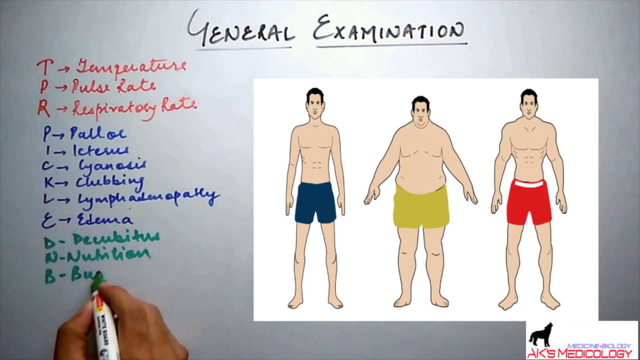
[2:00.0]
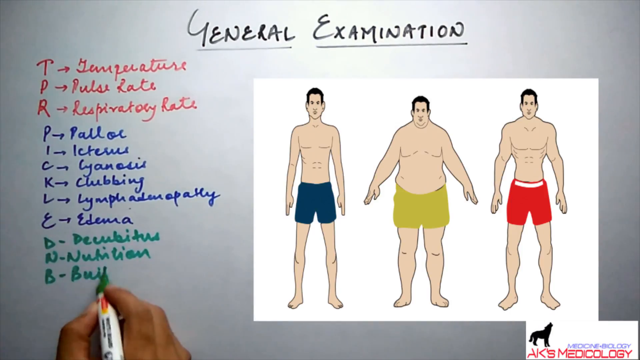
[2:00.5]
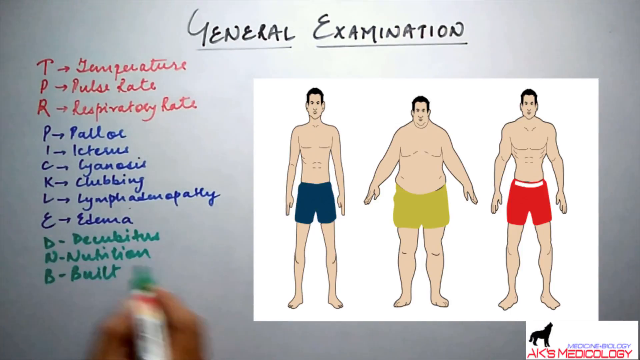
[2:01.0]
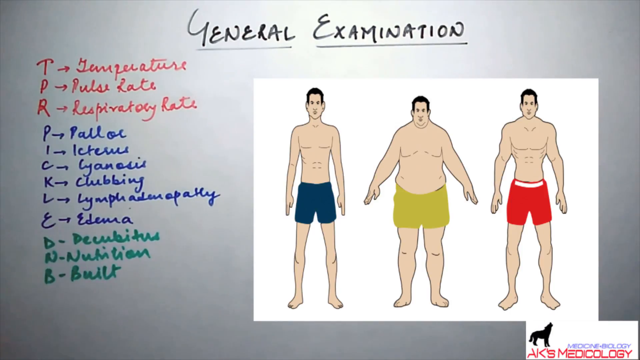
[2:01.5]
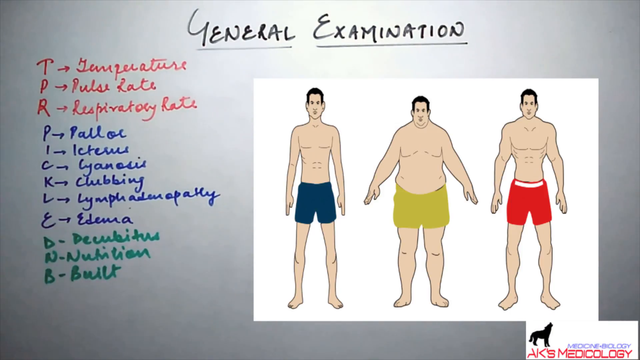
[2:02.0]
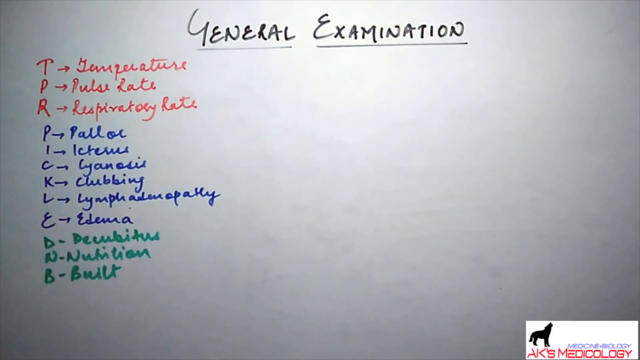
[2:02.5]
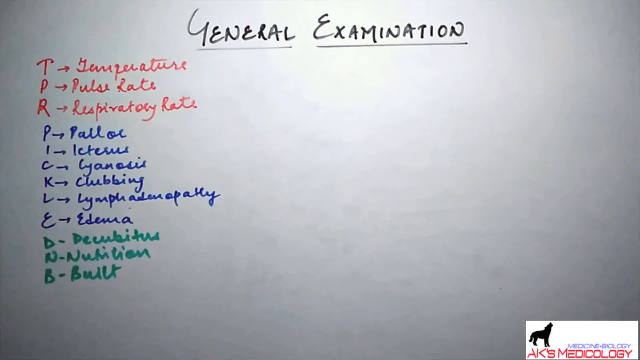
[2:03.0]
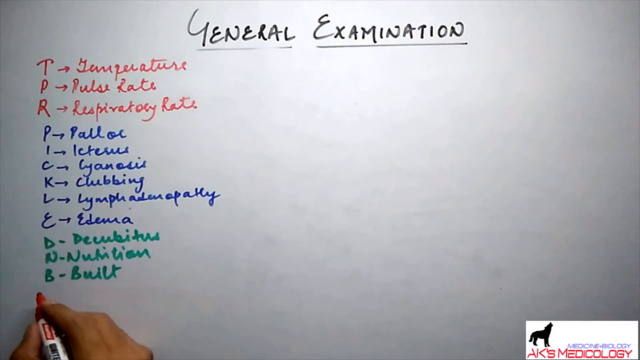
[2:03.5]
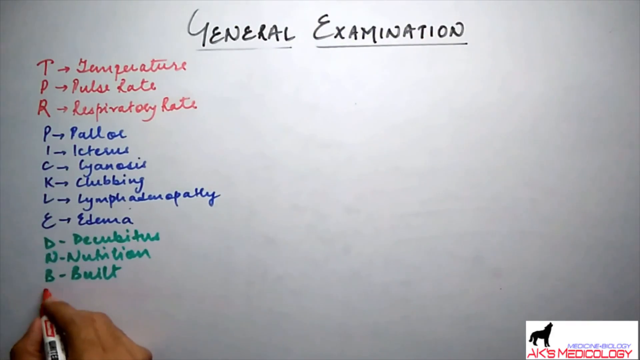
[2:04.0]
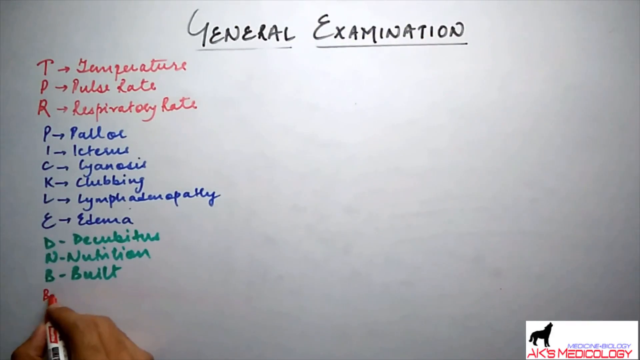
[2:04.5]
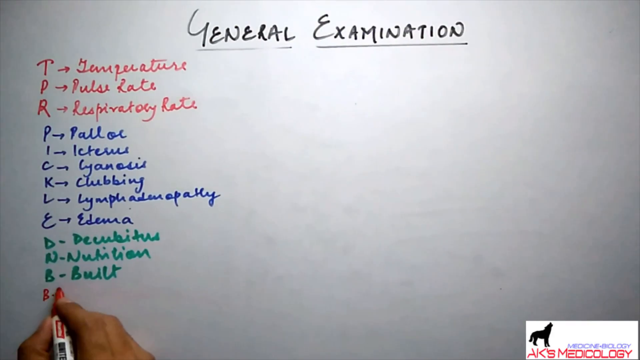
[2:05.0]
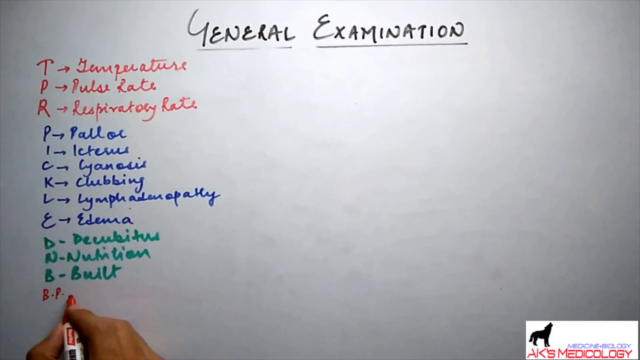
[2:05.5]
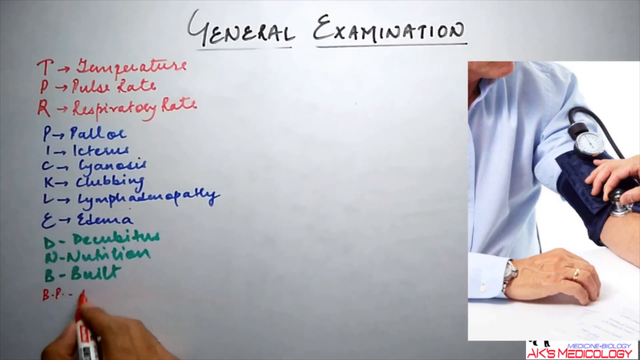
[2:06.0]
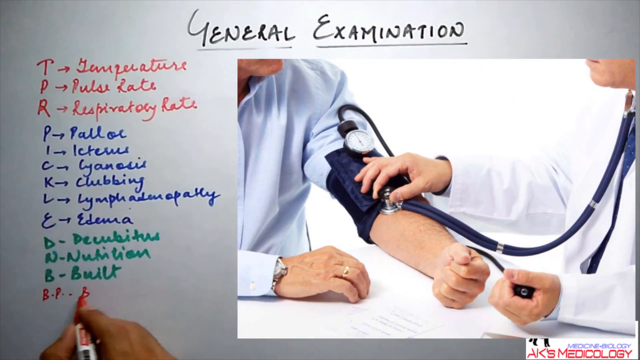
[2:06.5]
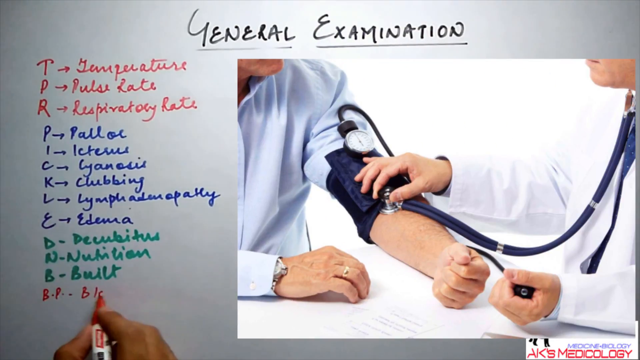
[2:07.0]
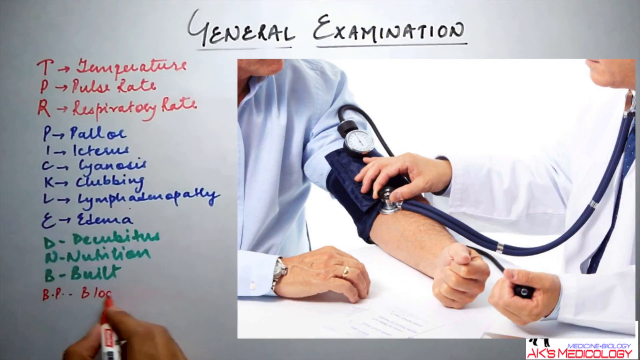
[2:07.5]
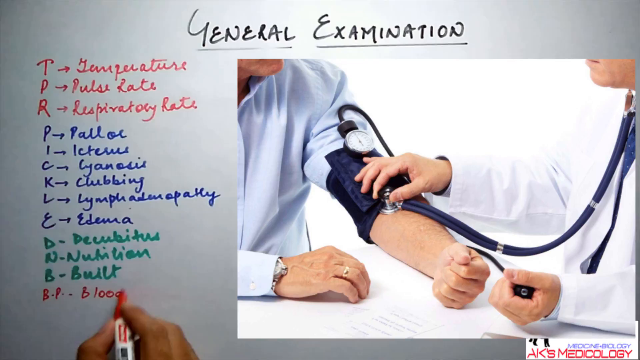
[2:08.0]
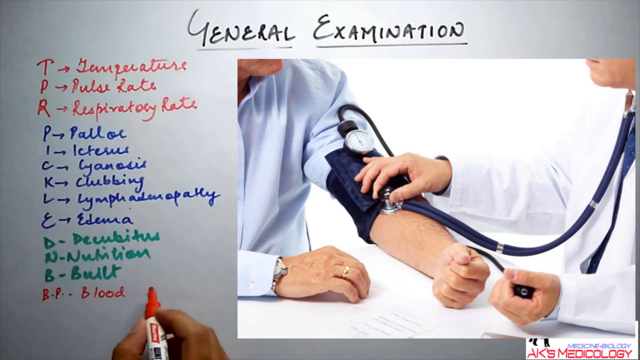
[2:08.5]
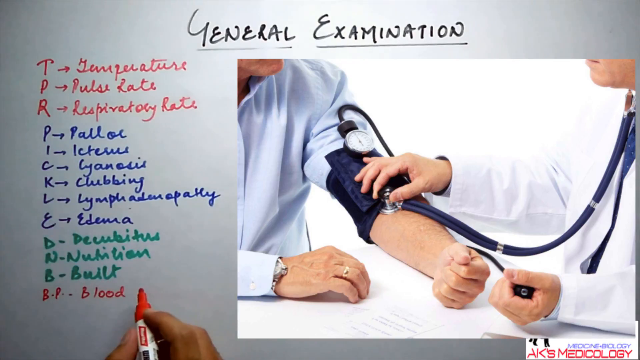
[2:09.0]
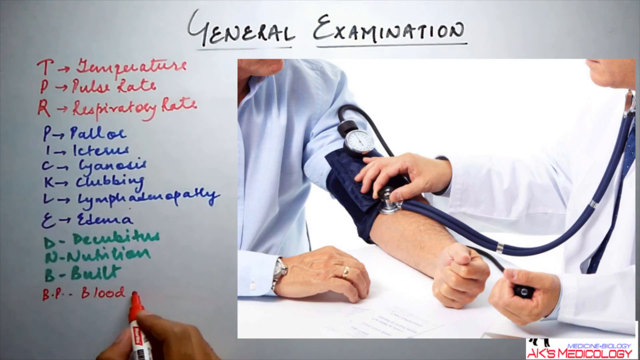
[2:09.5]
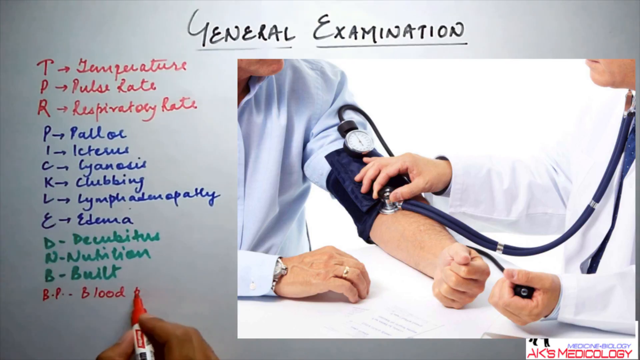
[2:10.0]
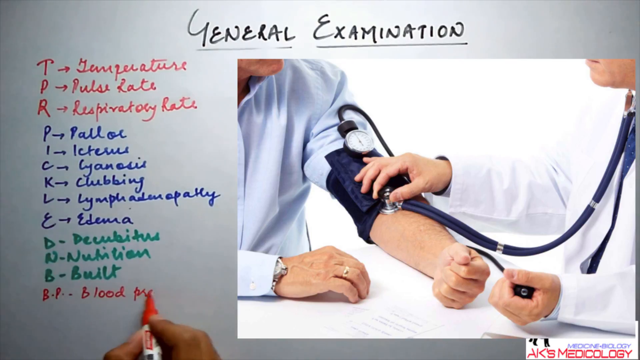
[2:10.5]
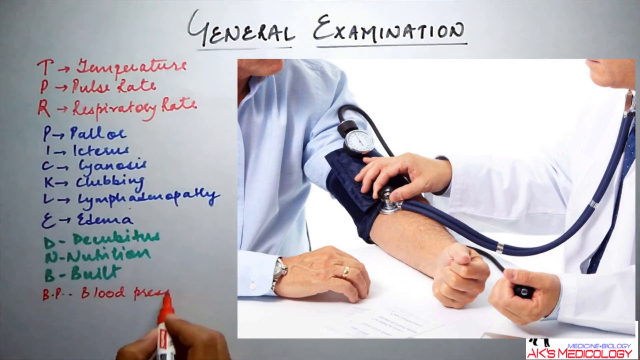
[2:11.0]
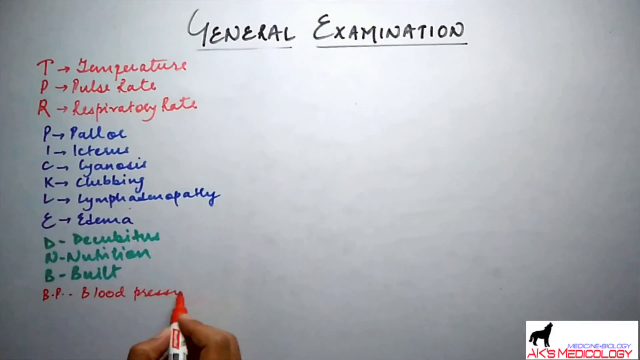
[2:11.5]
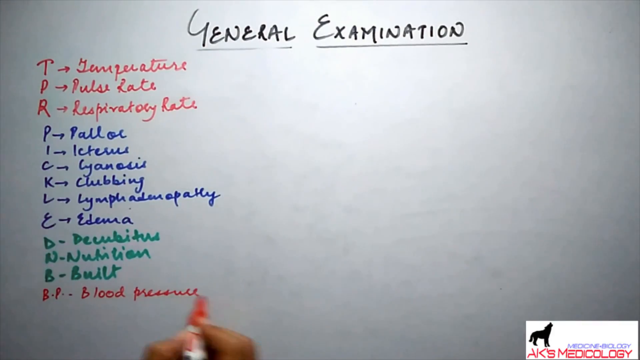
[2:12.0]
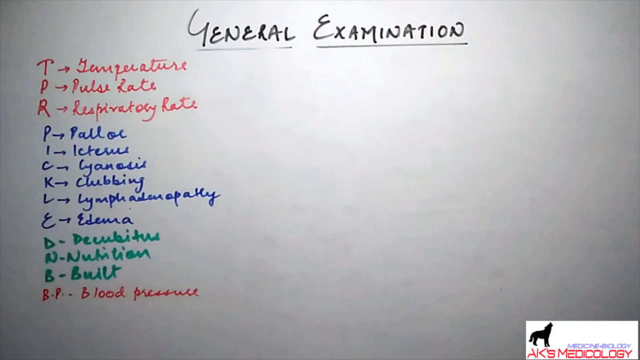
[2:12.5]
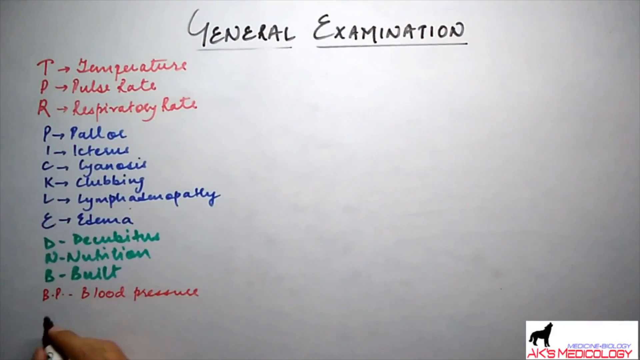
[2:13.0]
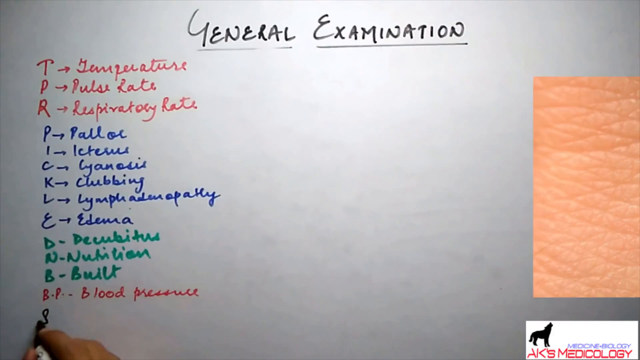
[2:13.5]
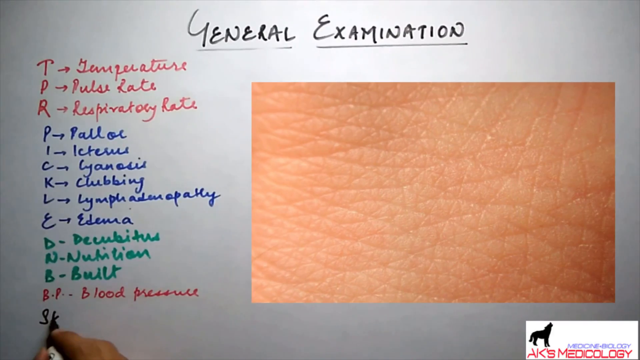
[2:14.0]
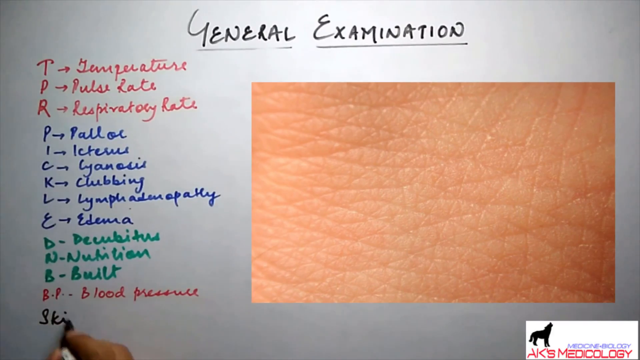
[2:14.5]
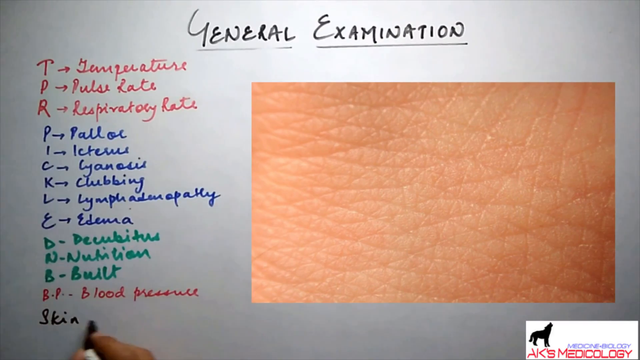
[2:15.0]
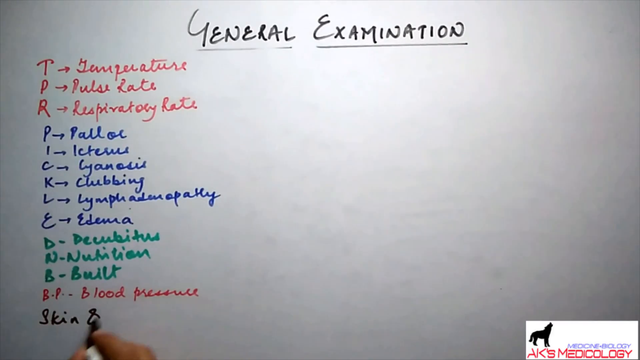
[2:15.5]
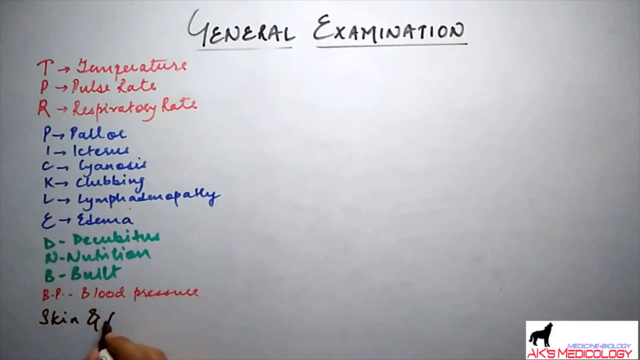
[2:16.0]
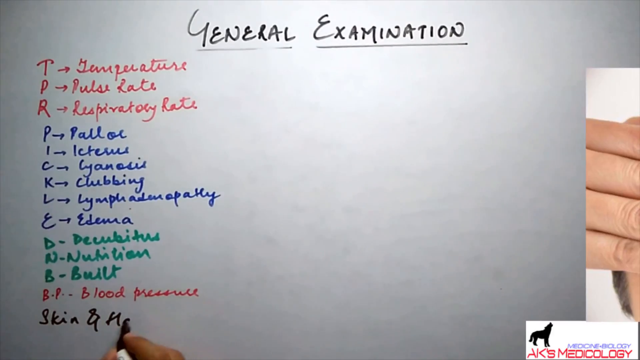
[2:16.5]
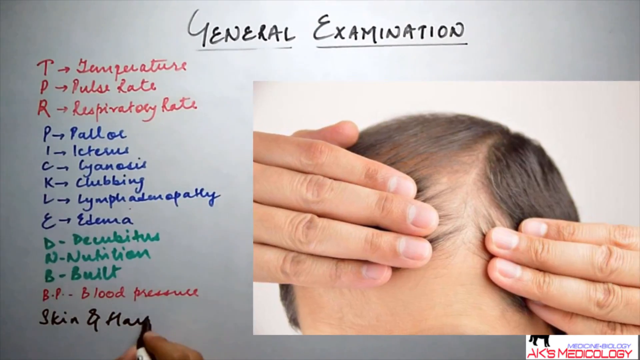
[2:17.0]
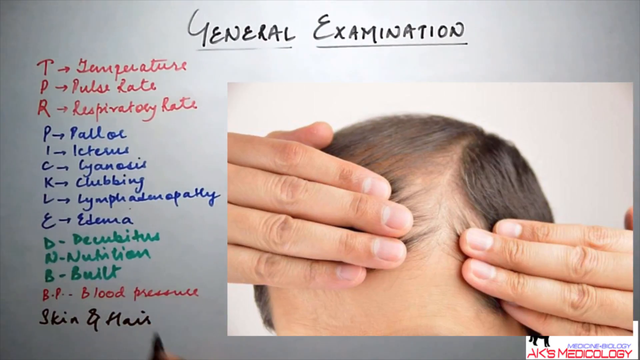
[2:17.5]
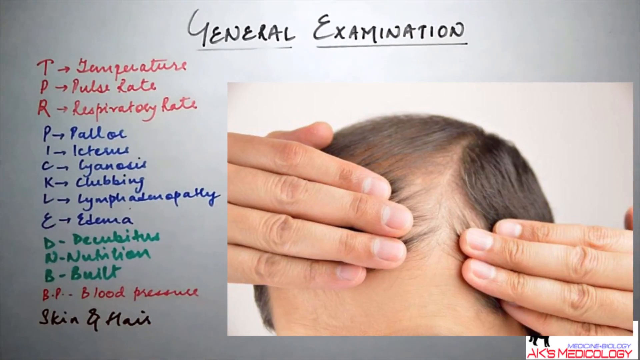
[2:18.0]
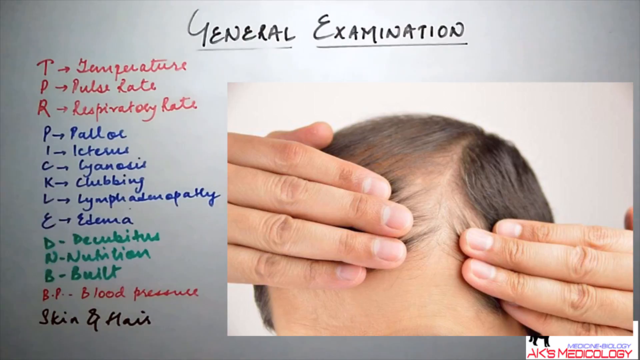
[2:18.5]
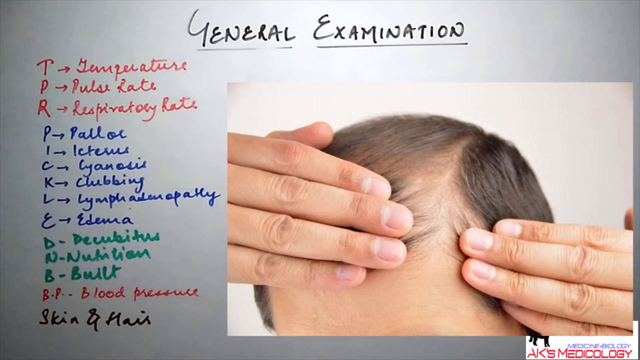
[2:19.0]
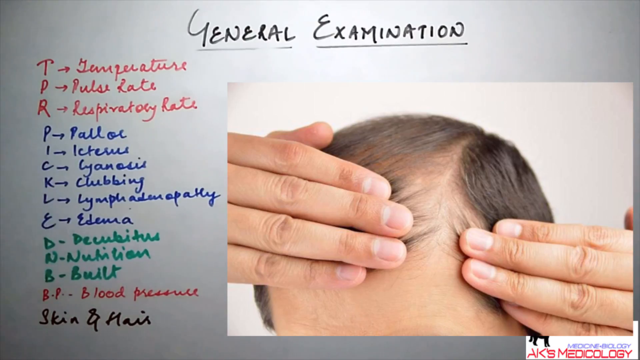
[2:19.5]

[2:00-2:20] The whiteboard has "General Examination" written at the top, with letters in different colored inks. A person writes the letters BP in red, standing for blood pressure, and a picture shows a doctor taking a person's blood pressure; the person wears a blue shirt, a silver watch and a silver wedding band. The next picture shows a man showing his hair. Each frame shows pictures illustrating what the letters represent.